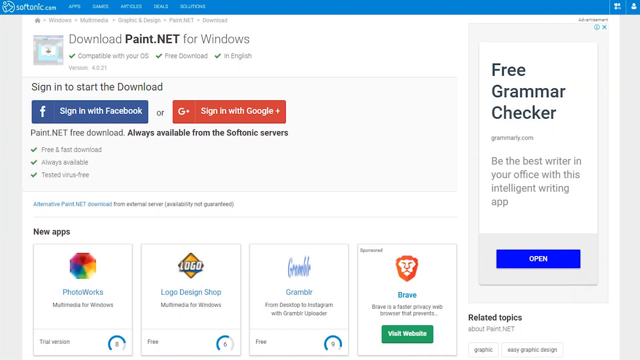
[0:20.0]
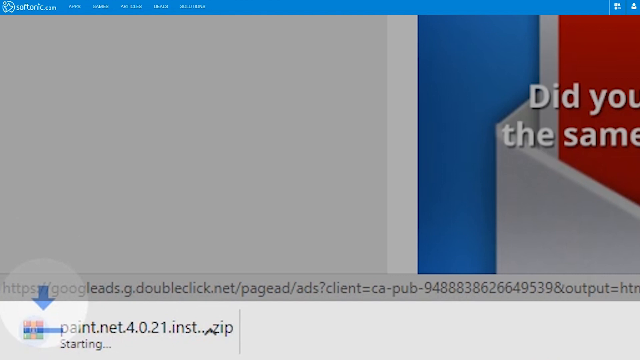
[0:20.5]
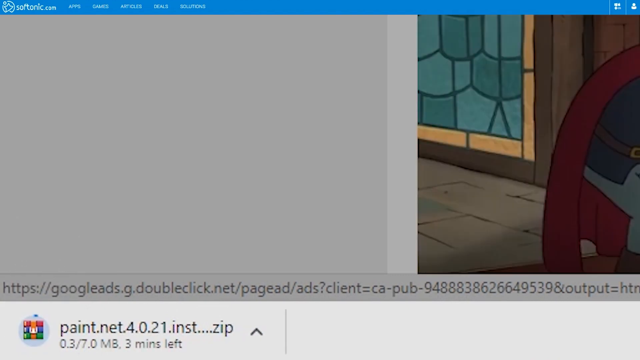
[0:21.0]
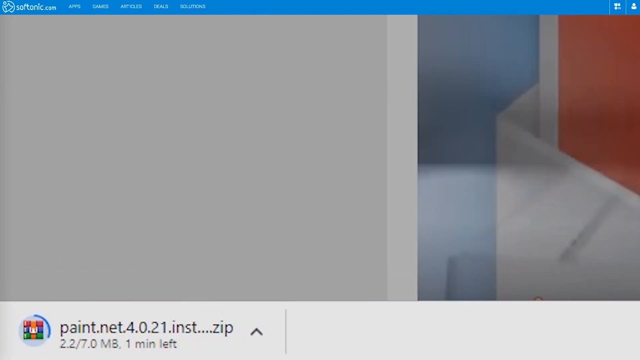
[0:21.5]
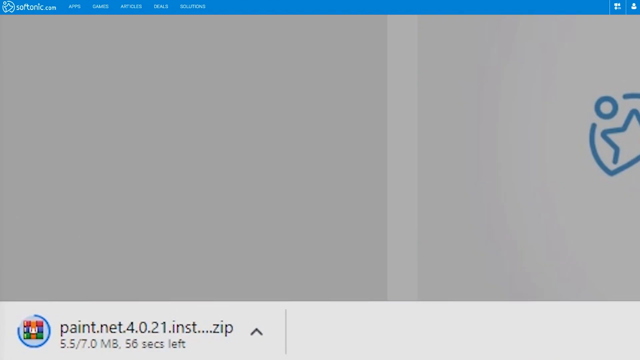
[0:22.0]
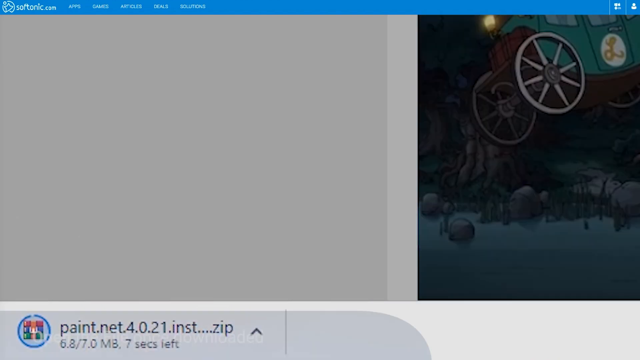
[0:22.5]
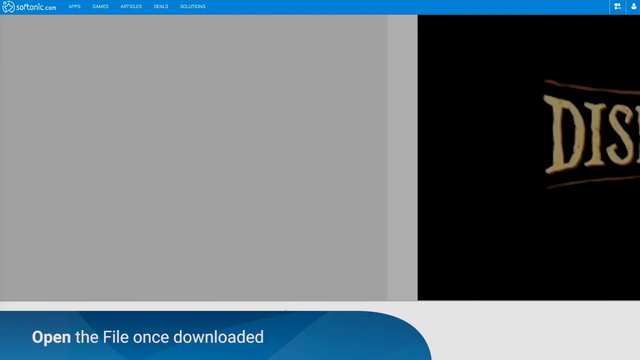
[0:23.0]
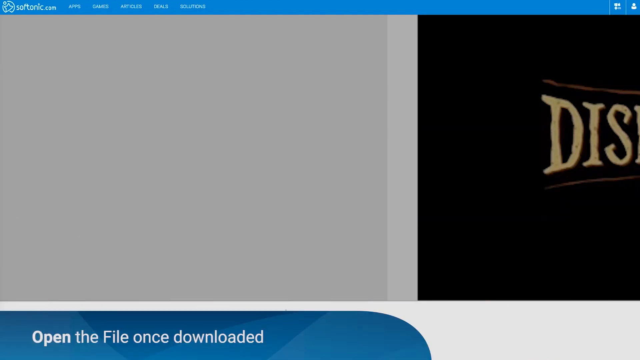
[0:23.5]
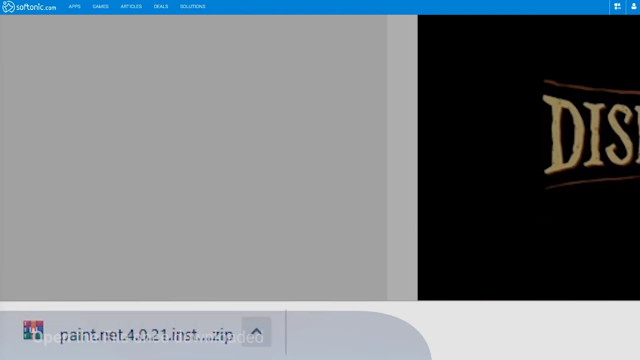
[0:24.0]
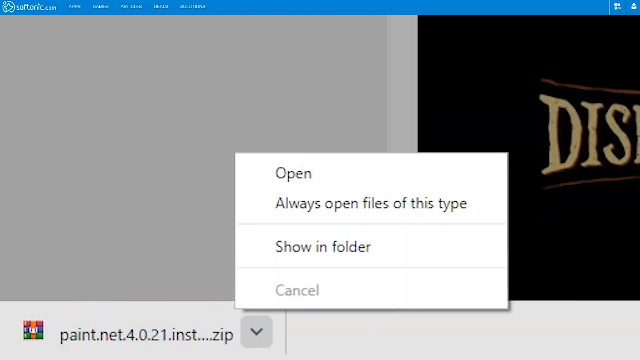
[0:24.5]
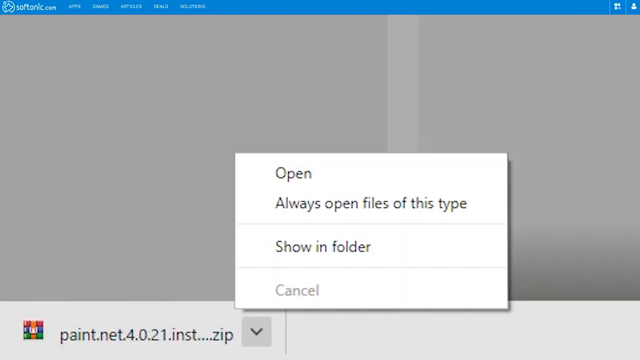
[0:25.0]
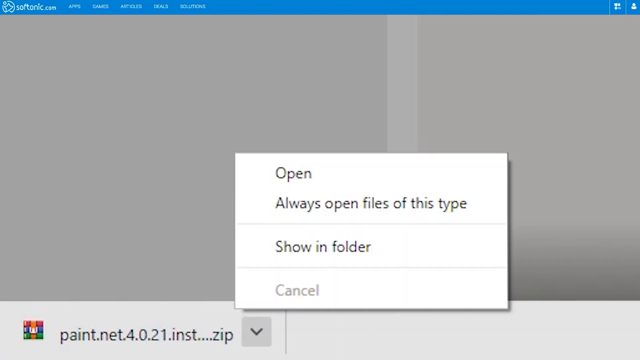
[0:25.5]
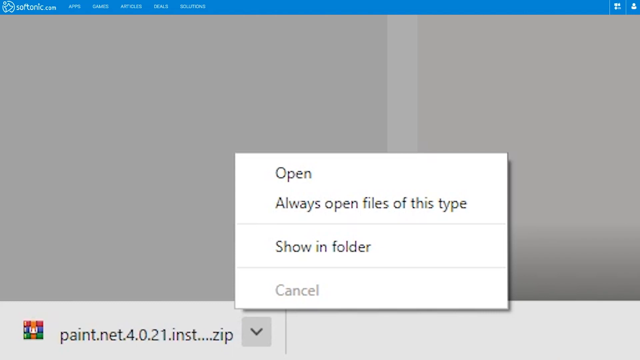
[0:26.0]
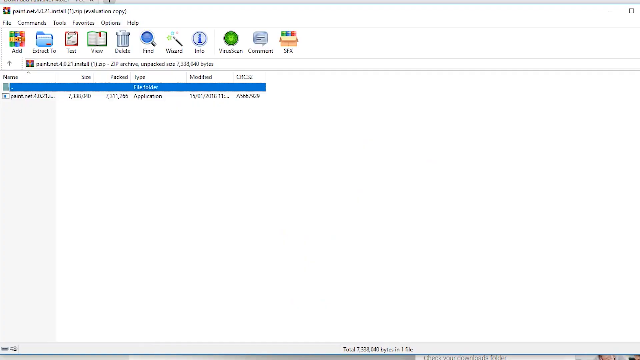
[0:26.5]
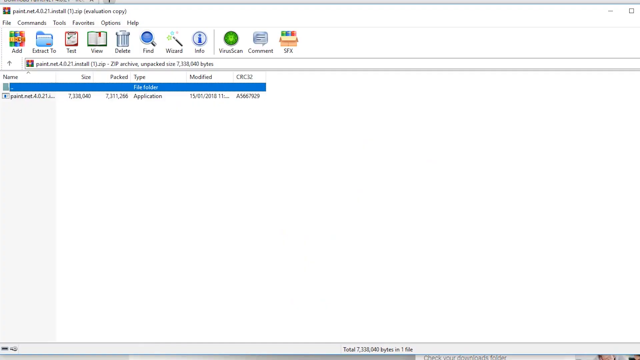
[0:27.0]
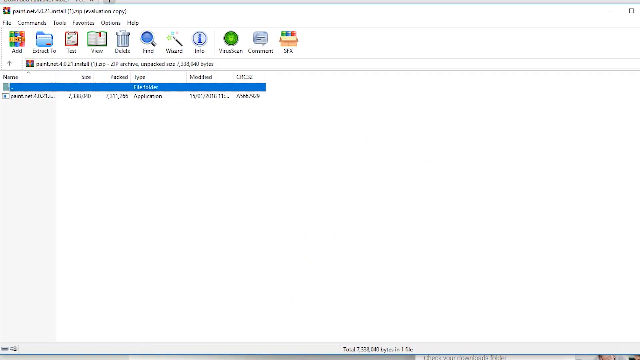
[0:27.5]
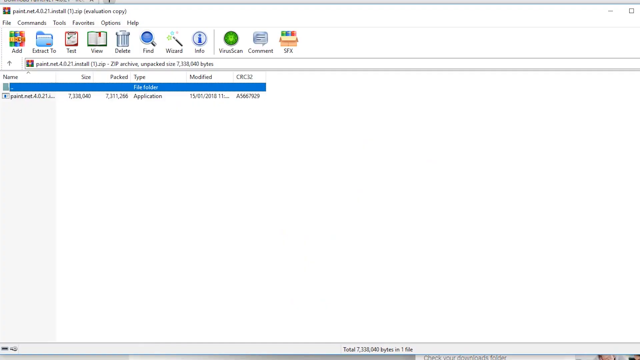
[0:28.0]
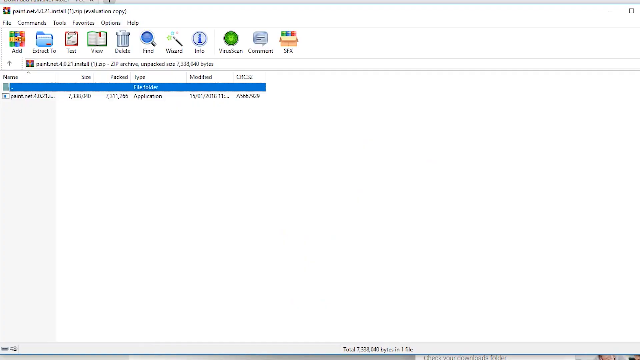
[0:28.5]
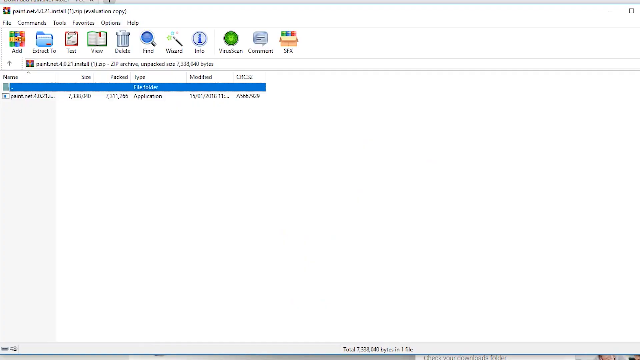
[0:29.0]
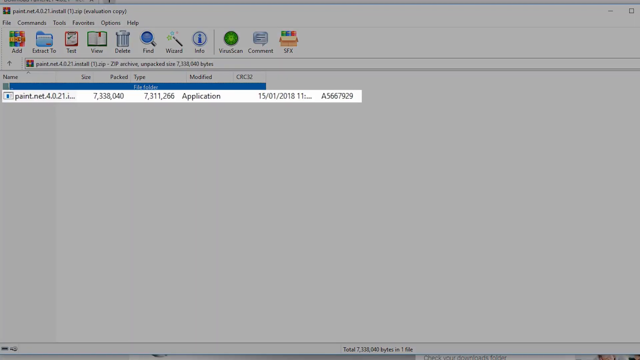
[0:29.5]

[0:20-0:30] The softonic.com website is still shown, now on the paint.net for Windows download page. The screen zooms in to show the download at the bottom of the browser. The user clicks the download to open it, and it opens within a zip folder. The application inside the zip folder is highlighted by zooming in on that section of the screenshot; the enlarged area shows the application, its size and when it was last modified. The screen stays on this view.